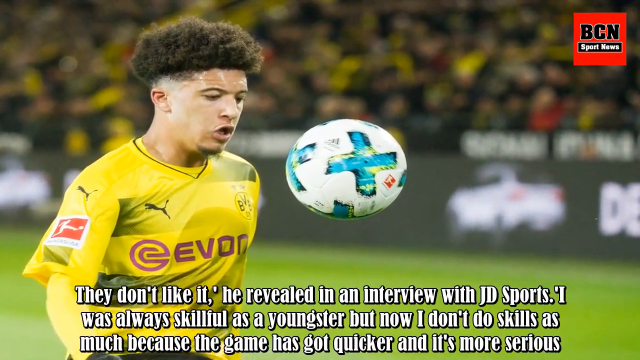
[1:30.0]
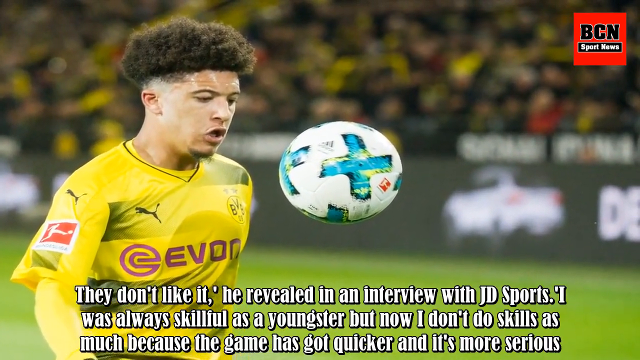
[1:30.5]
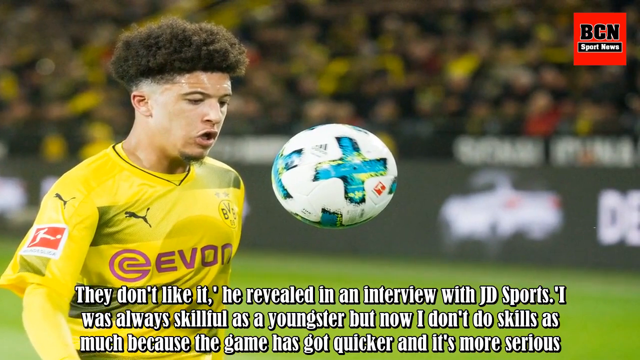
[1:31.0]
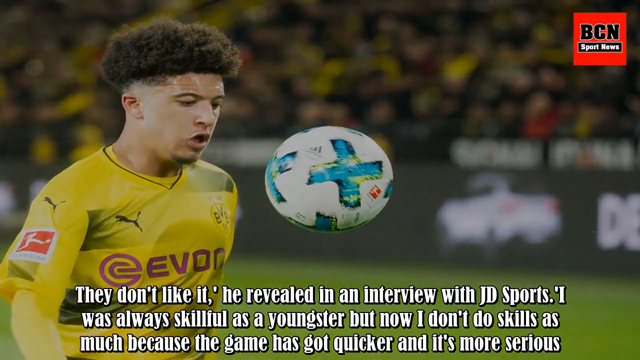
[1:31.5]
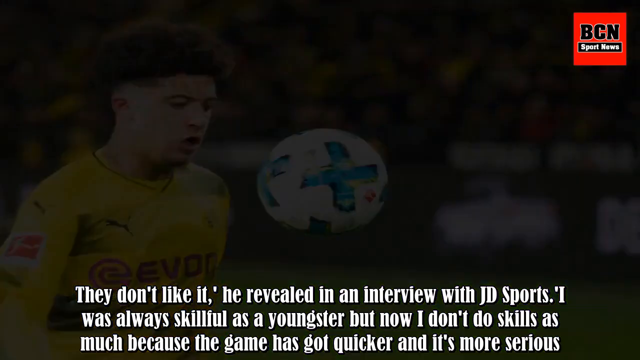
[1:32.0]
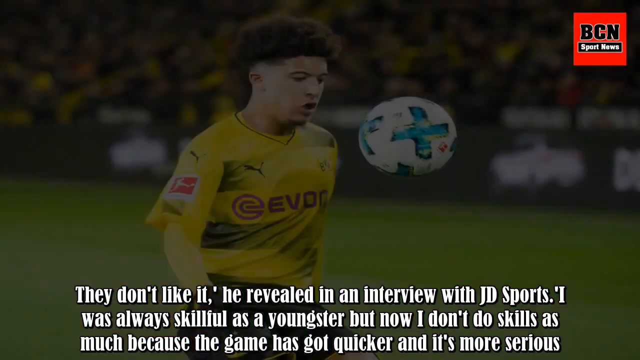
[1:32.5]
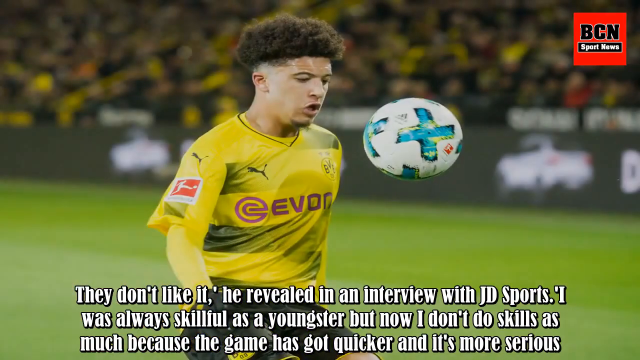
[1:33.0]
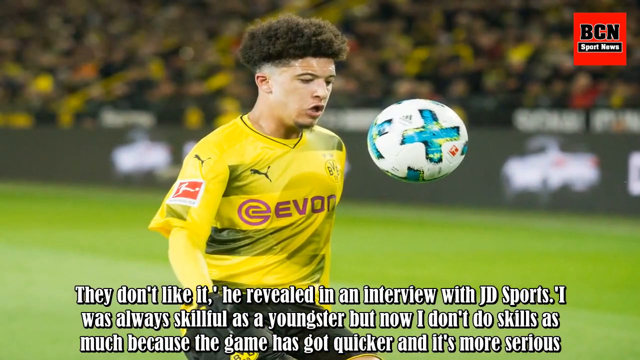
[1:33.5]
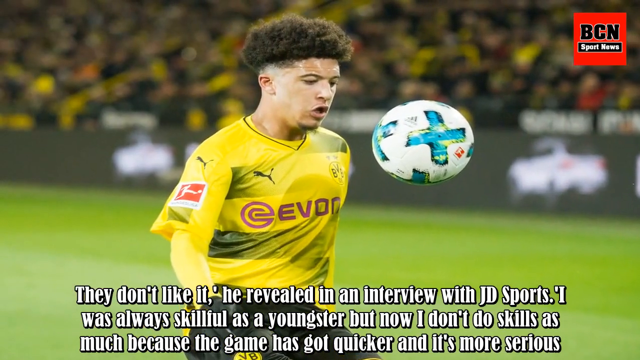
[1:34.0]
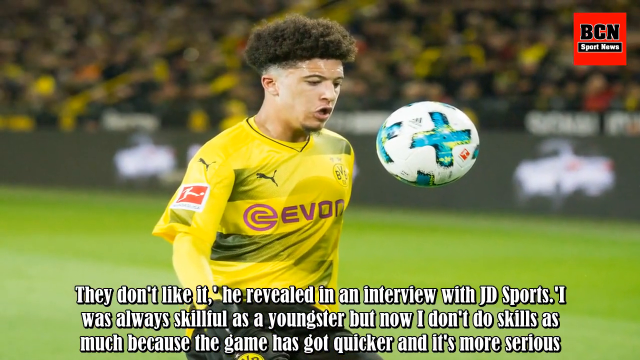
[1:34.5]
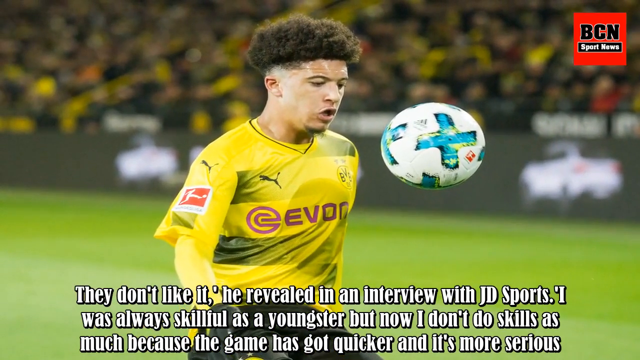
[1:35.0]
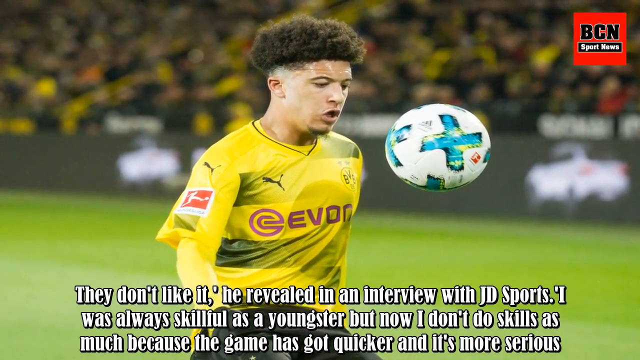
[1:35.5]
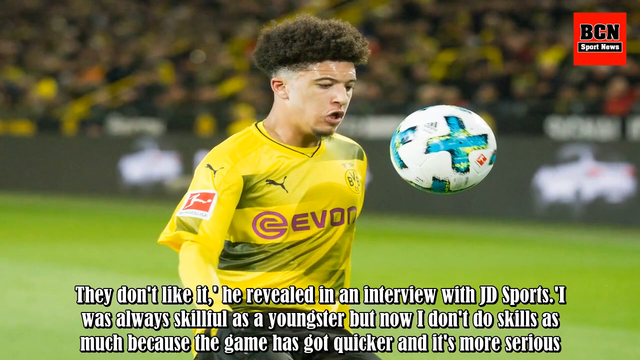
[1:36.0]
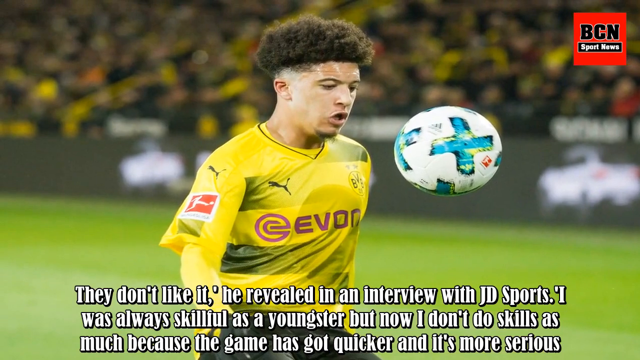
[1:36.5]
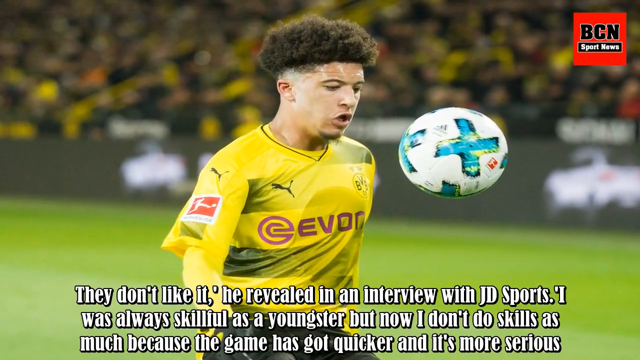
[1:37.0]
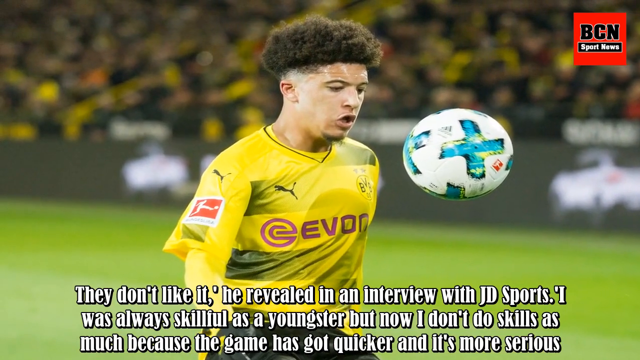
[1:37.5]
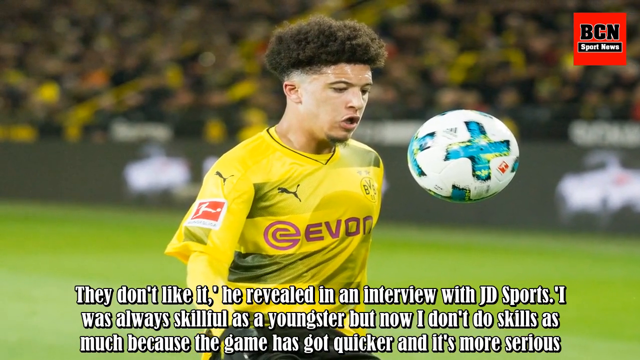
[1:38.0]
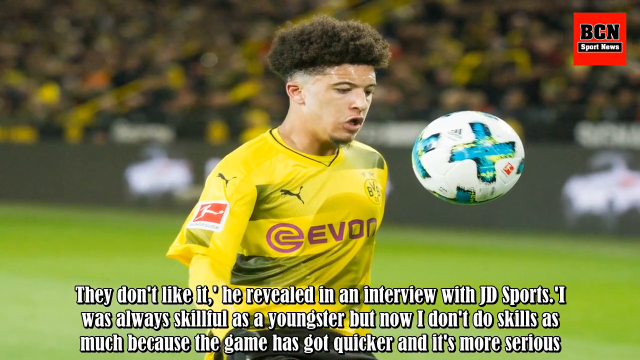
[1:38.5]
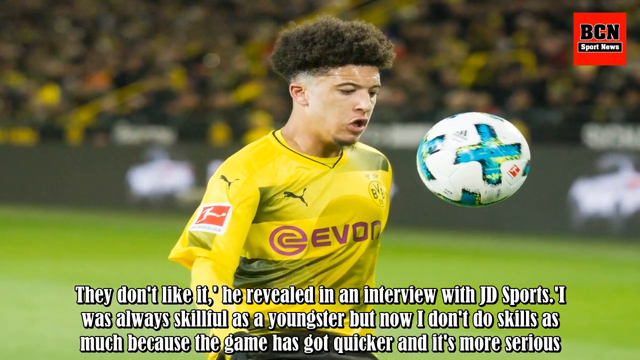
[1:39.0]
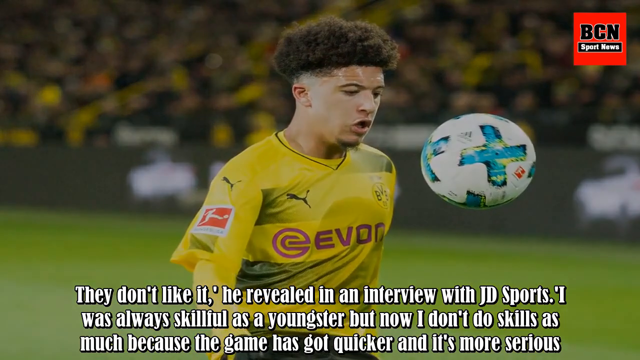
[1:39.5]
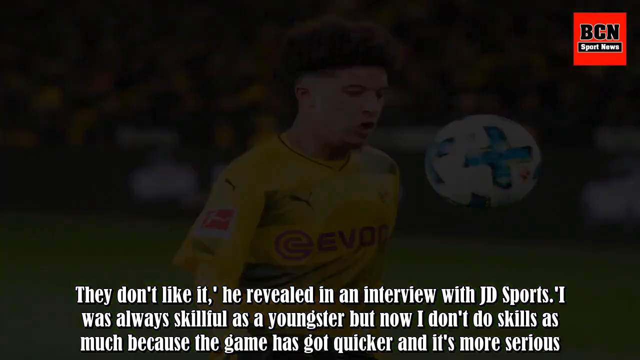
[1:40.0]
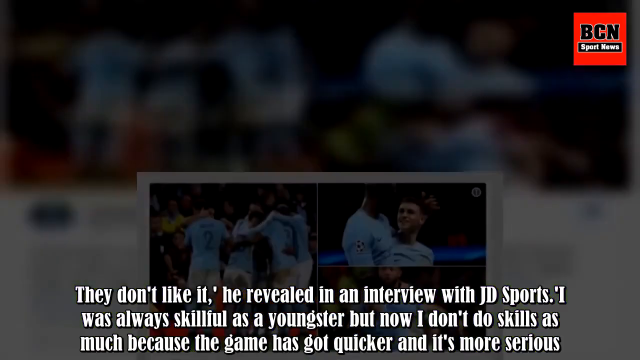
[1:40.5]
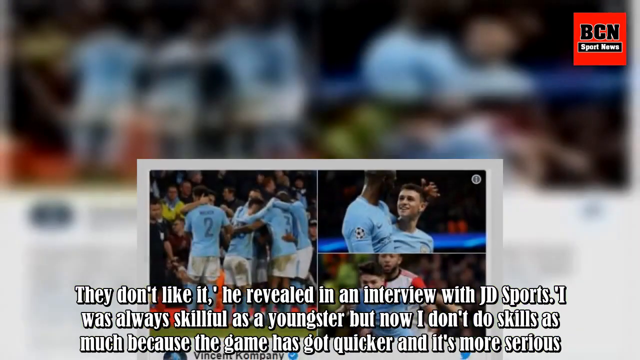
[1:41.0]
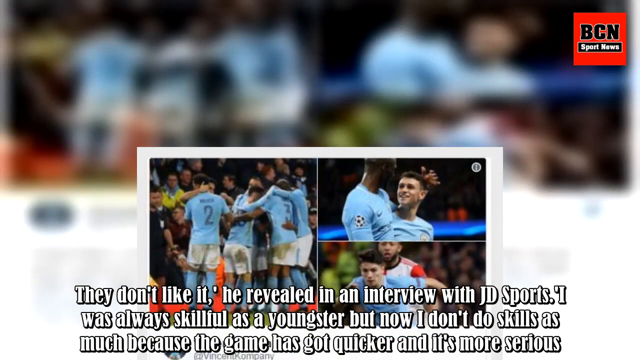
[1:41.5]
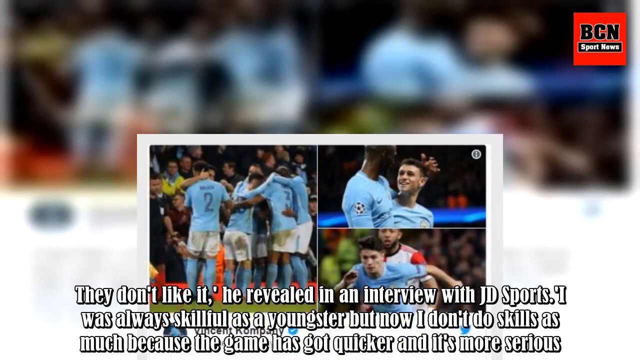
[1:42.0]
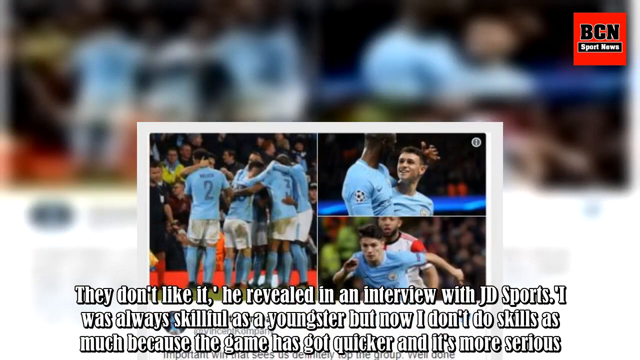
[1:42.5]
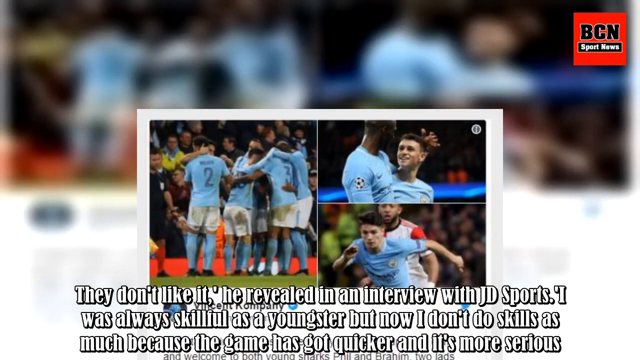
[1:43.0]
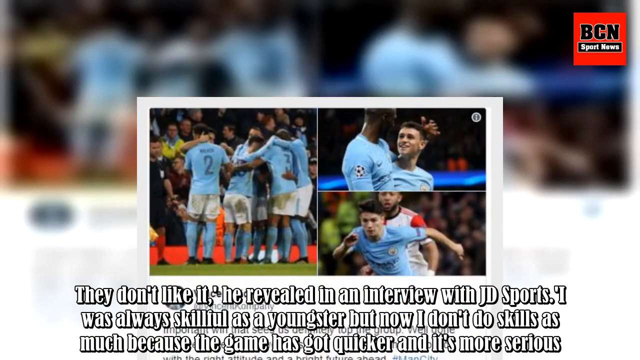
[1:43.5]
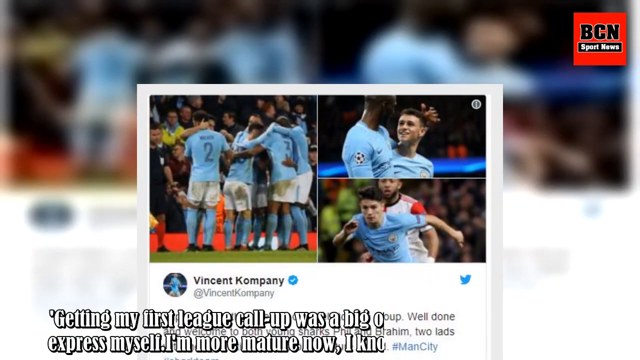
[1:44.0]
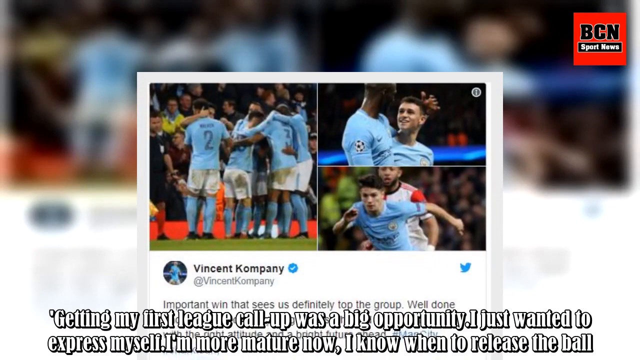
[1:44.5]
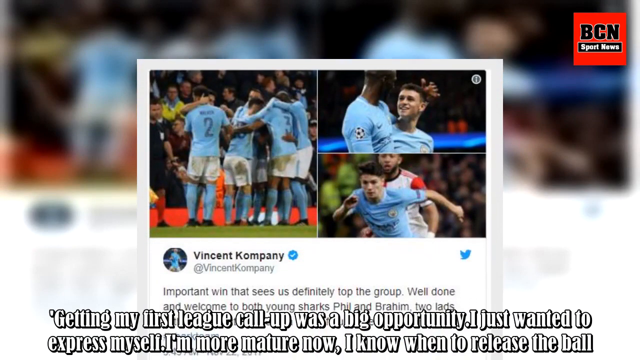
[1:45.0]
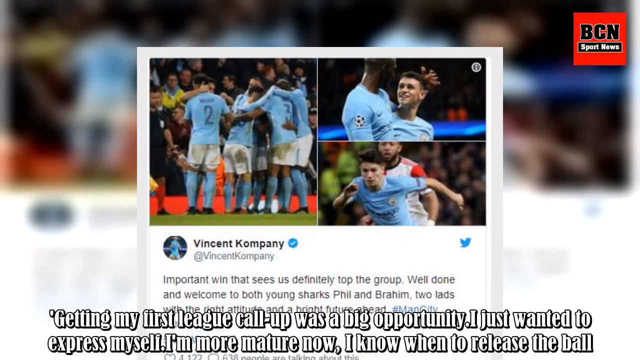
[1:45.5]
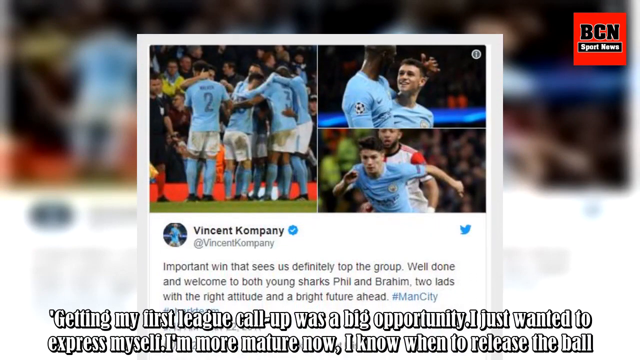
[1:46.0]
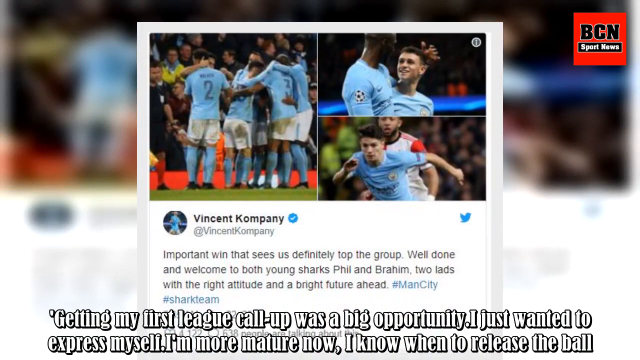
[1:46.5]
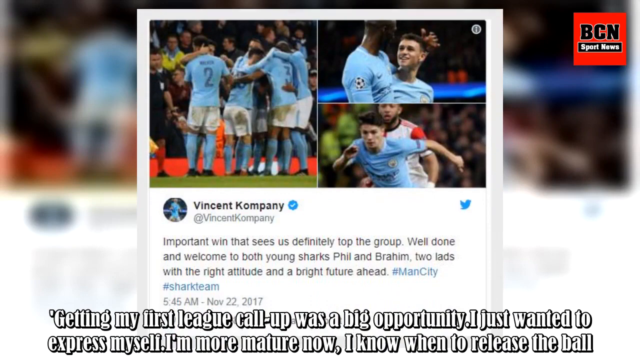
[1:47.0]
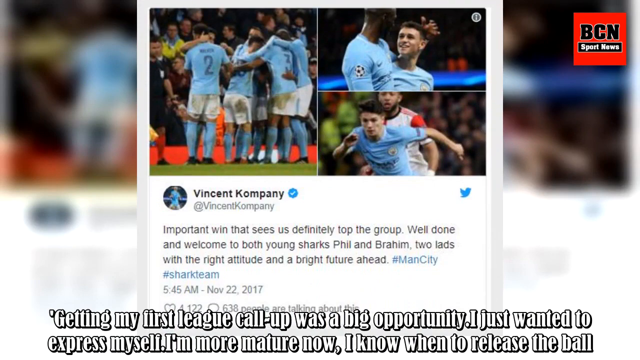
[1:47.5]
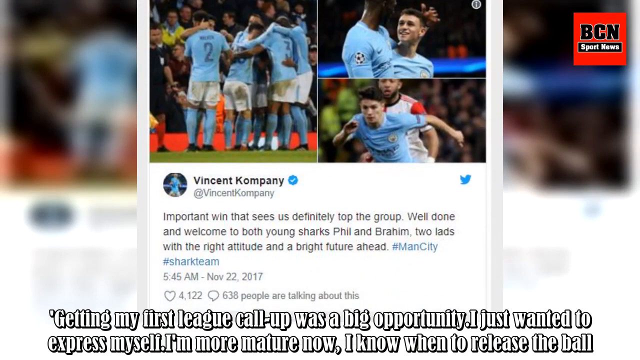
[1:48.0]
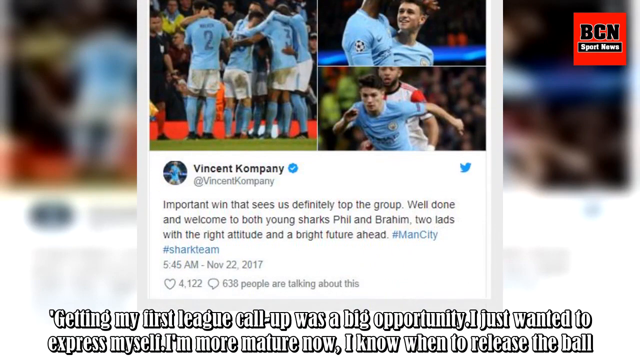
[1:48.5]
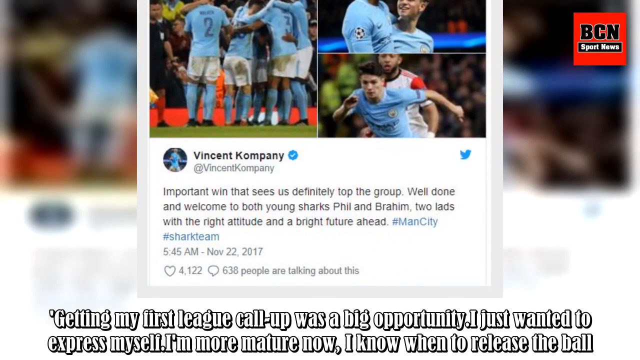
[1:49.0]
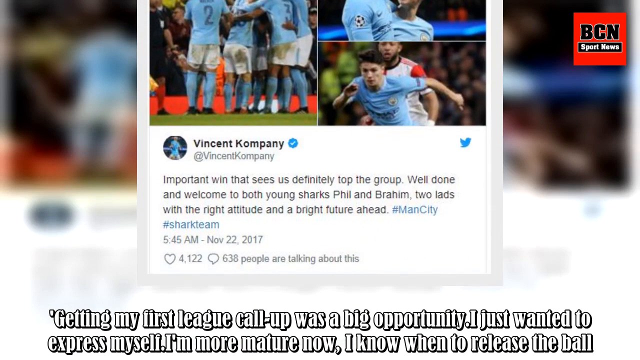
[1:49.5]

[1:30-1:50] A soccer player in a yellow jersey has a ball up in the air in front of him, about a foot from his chest. The ball is white with blue X's, and the player seems to be looking right at it. Behind him is a field of green grass and the stands, where people are wearing yellow jerseys as well; the stands look completely blurry. In the foreground, white text is at the bottom of the screen. The picture slowly fades to black and then comes back at a more zoomed-out angle, showing that the player wears a long-sleeved yellow shirt under his jersey.